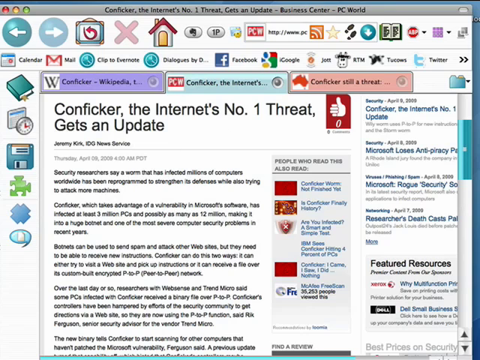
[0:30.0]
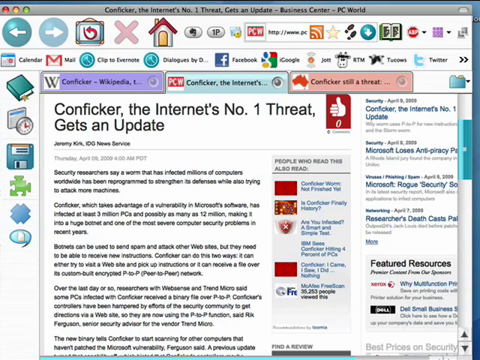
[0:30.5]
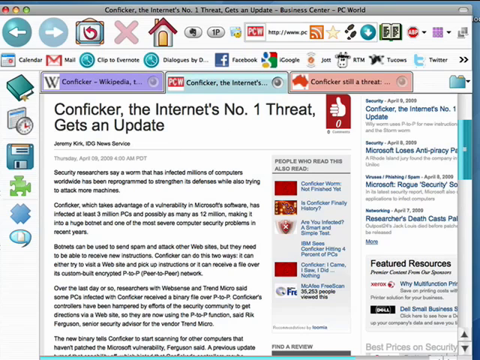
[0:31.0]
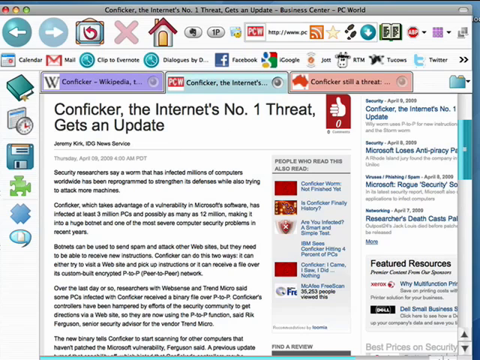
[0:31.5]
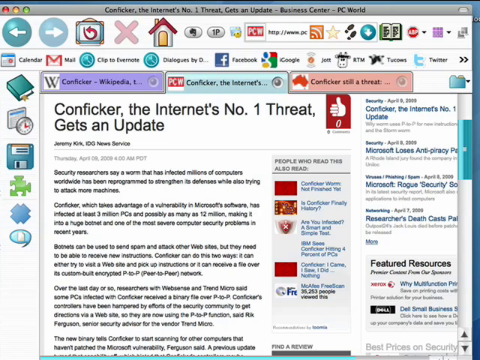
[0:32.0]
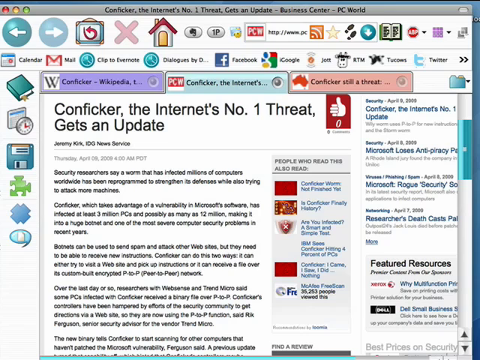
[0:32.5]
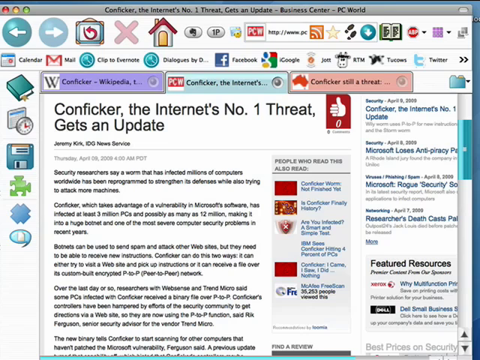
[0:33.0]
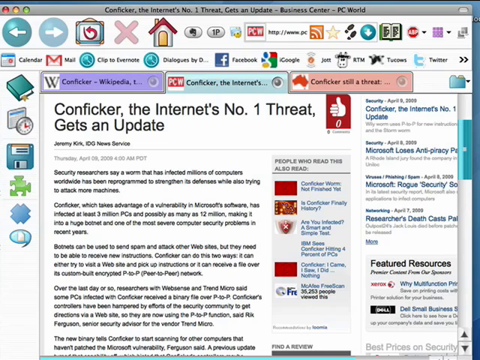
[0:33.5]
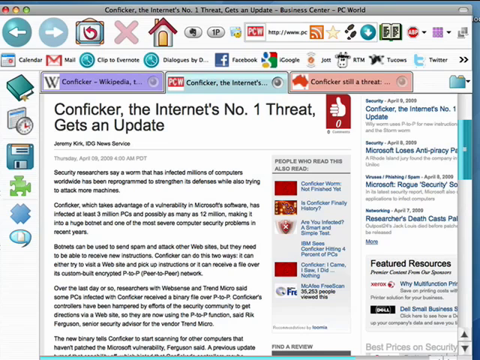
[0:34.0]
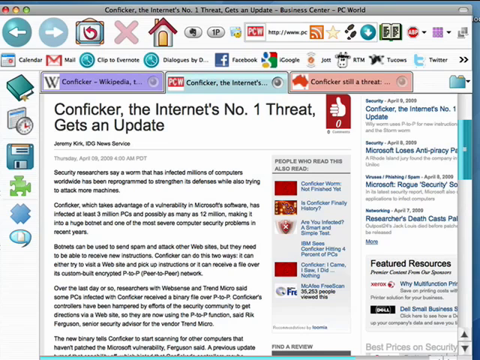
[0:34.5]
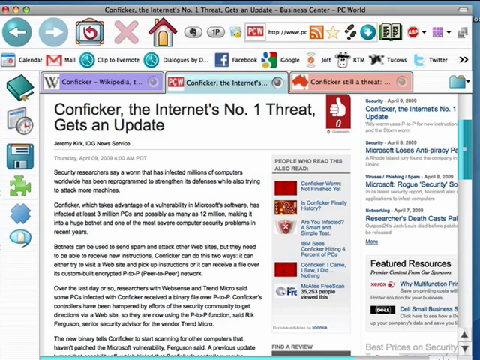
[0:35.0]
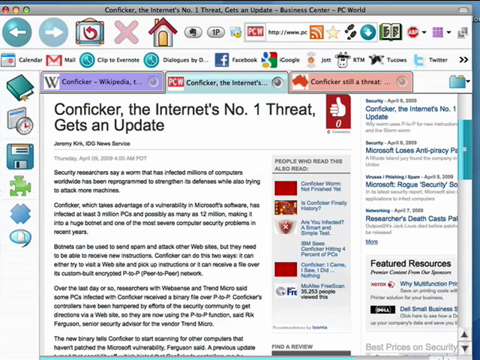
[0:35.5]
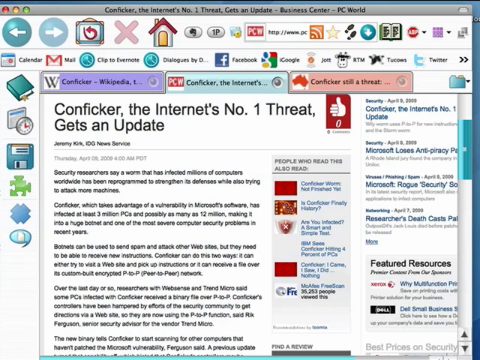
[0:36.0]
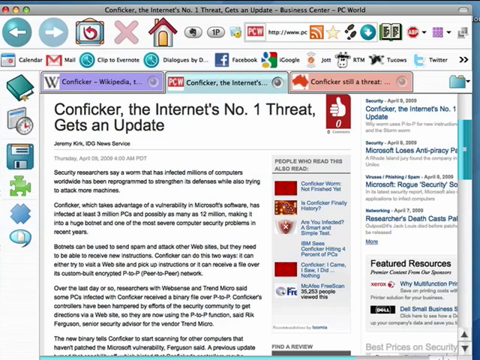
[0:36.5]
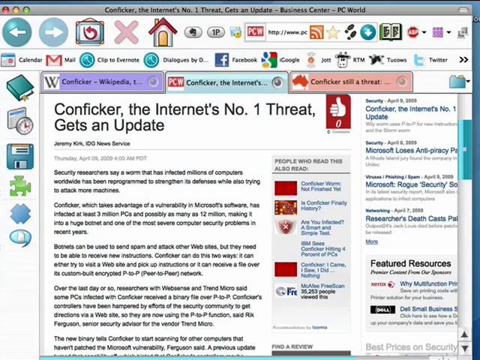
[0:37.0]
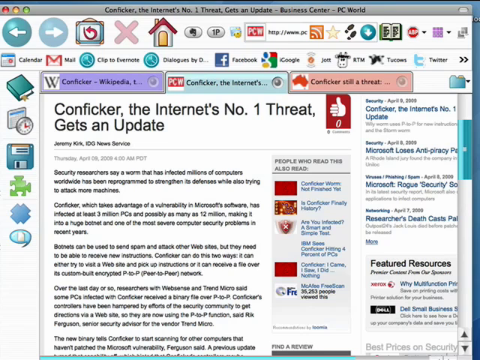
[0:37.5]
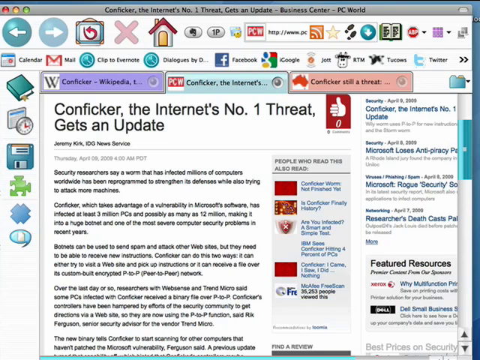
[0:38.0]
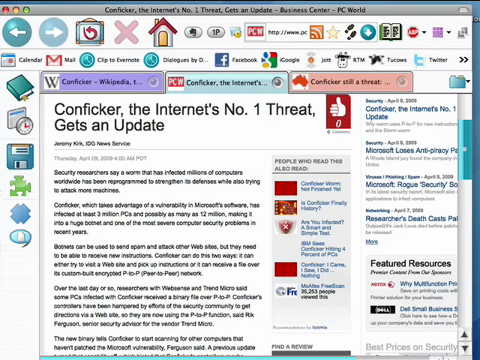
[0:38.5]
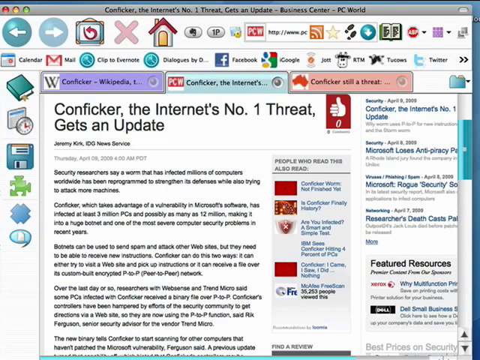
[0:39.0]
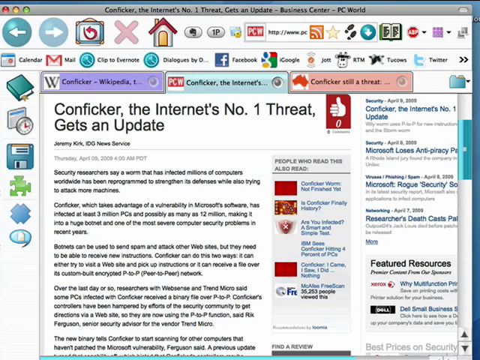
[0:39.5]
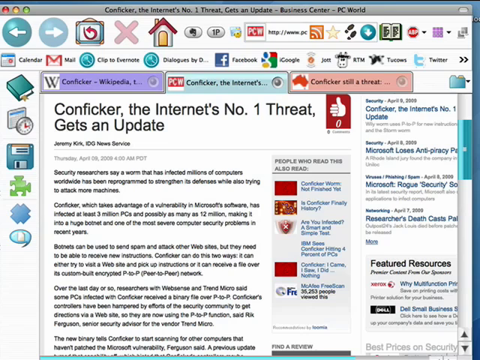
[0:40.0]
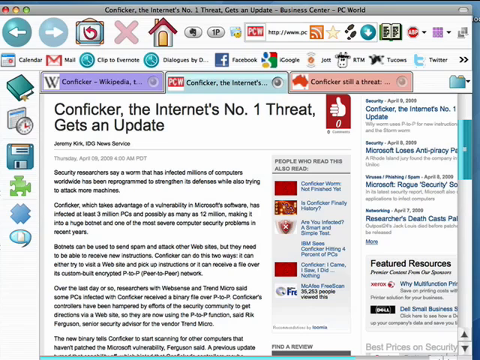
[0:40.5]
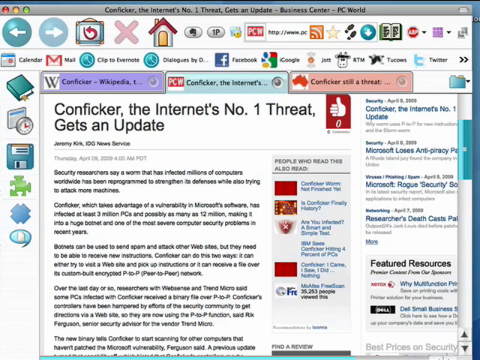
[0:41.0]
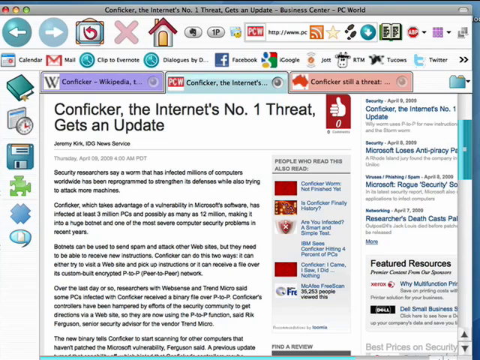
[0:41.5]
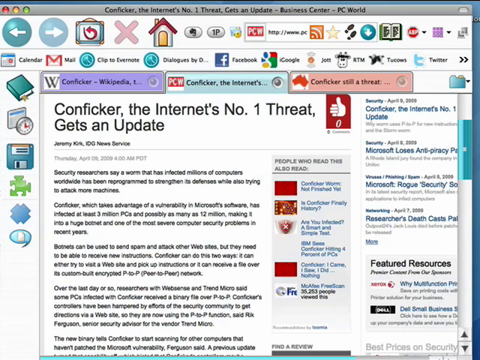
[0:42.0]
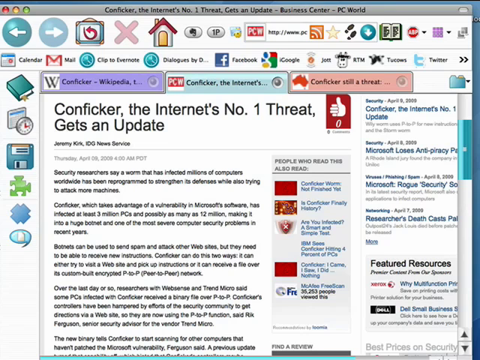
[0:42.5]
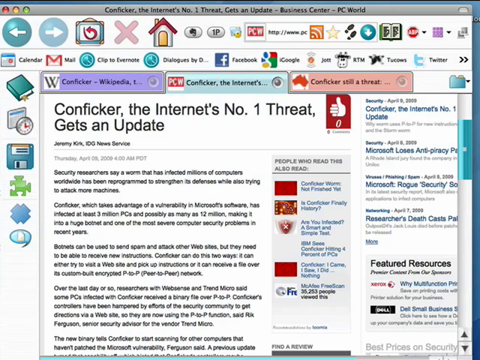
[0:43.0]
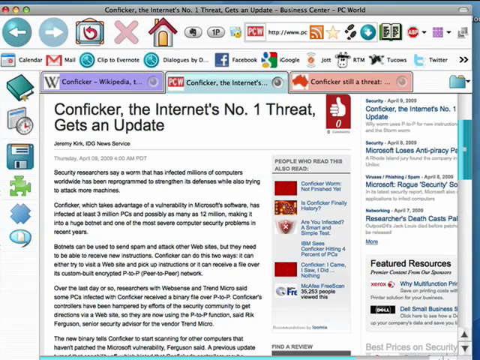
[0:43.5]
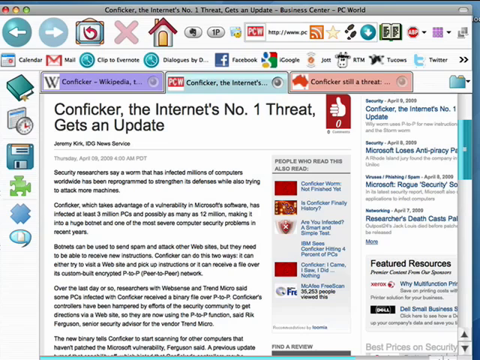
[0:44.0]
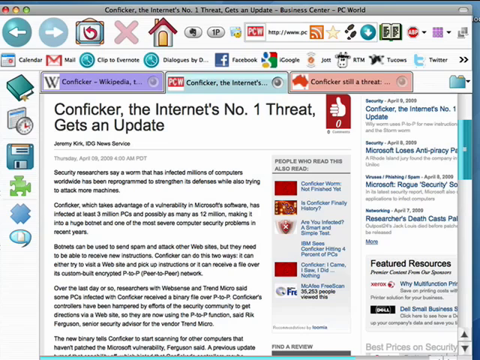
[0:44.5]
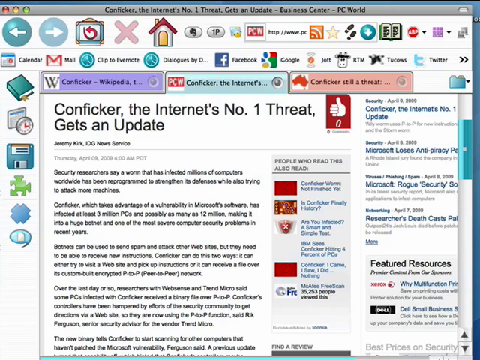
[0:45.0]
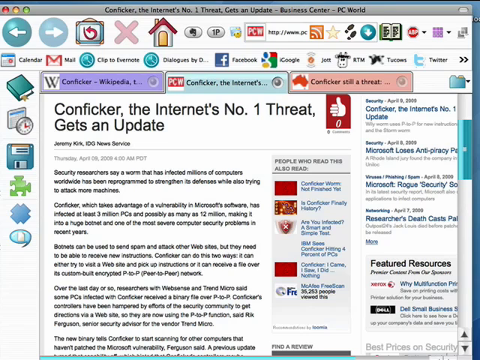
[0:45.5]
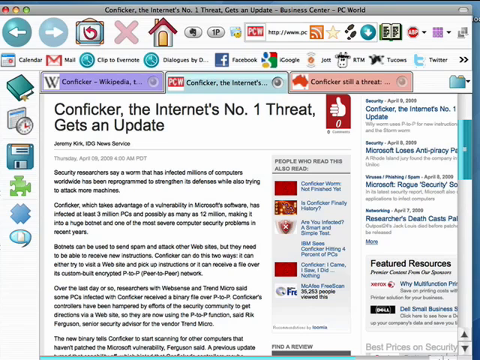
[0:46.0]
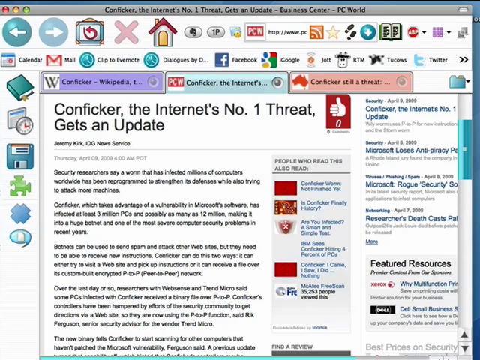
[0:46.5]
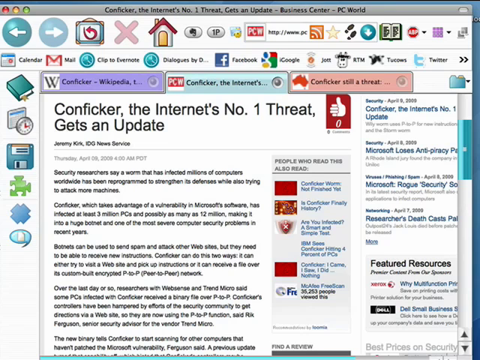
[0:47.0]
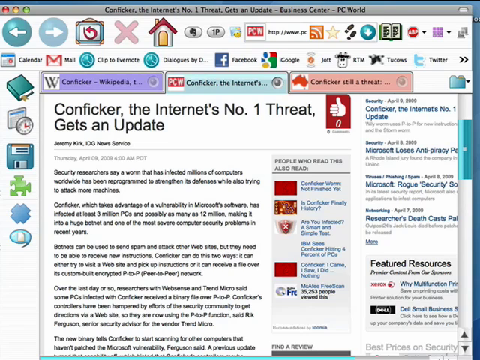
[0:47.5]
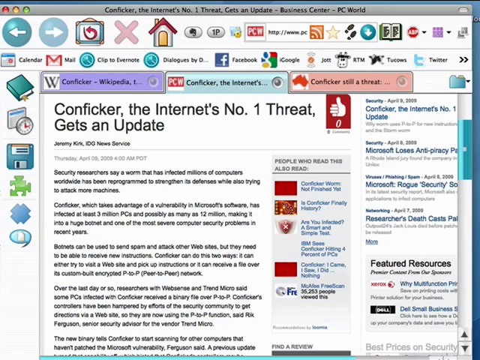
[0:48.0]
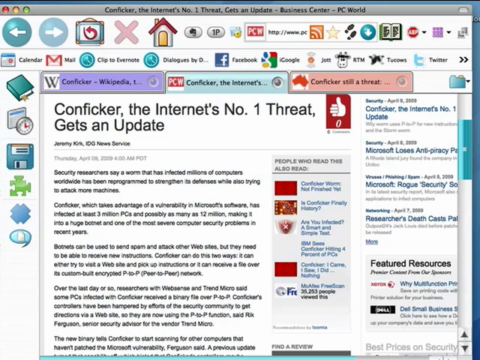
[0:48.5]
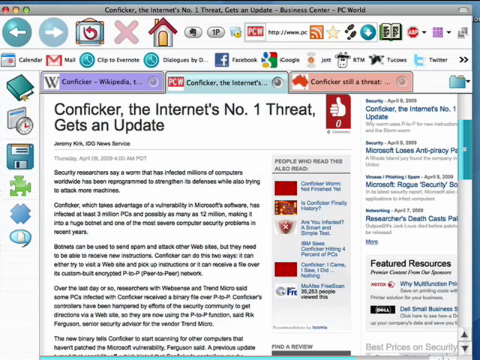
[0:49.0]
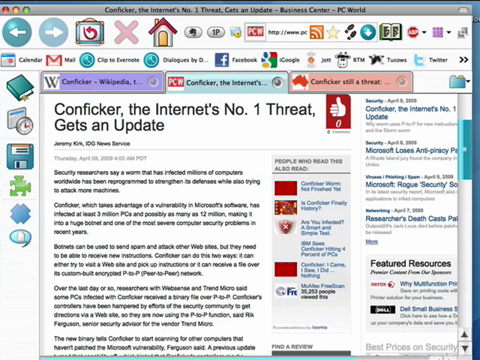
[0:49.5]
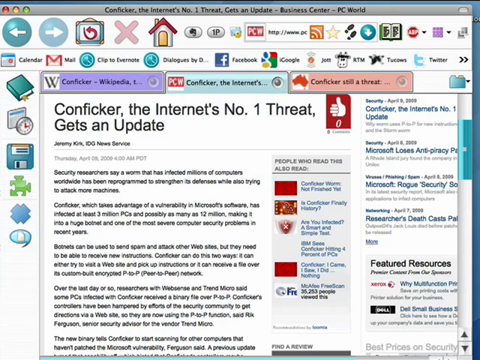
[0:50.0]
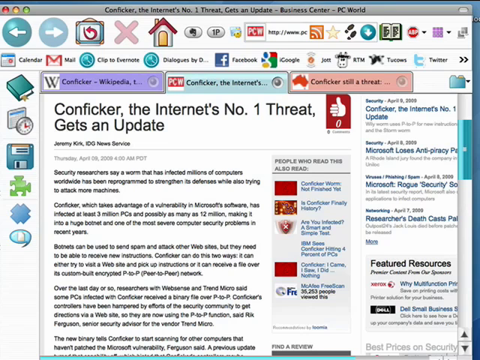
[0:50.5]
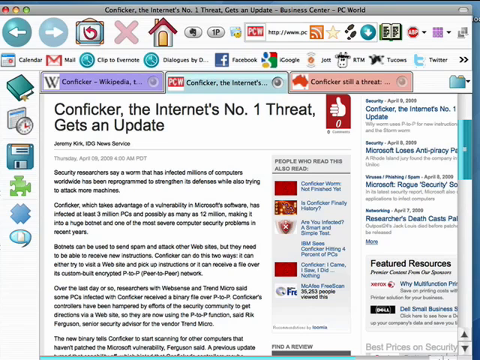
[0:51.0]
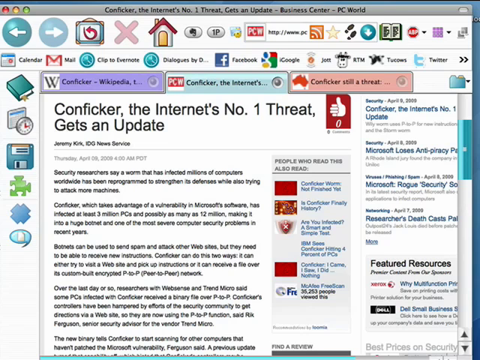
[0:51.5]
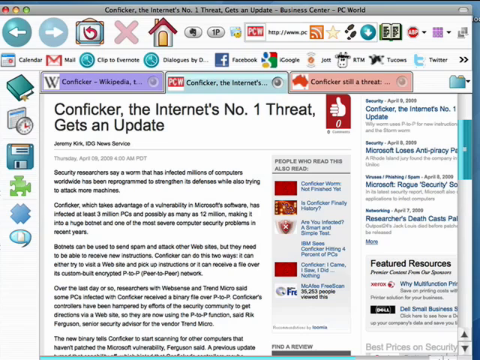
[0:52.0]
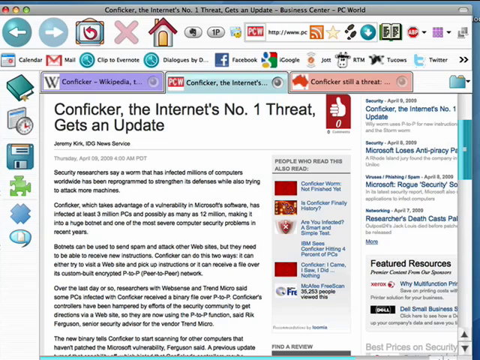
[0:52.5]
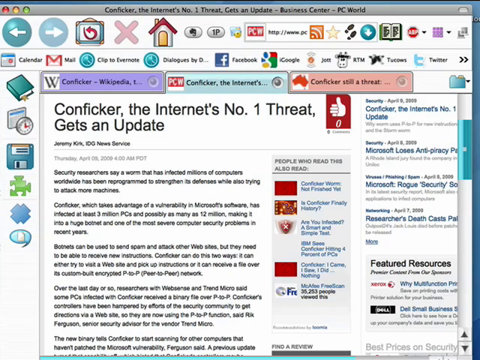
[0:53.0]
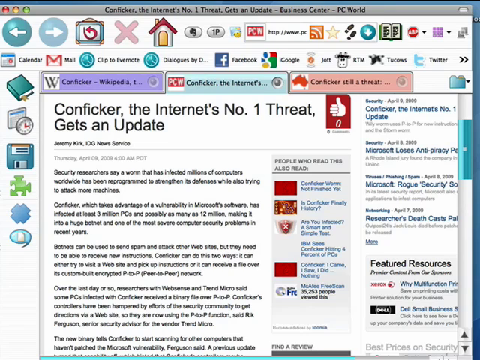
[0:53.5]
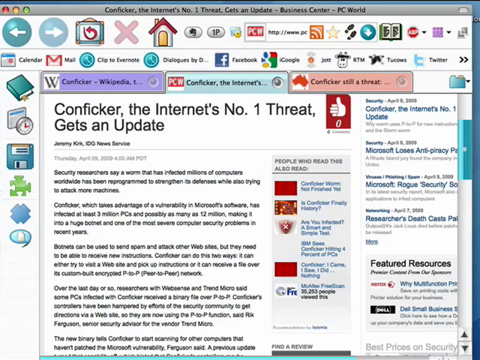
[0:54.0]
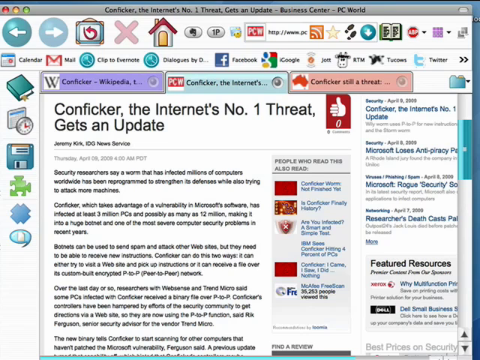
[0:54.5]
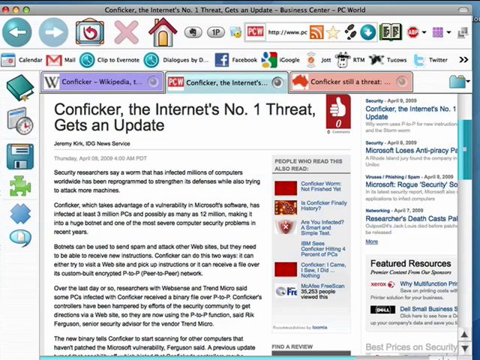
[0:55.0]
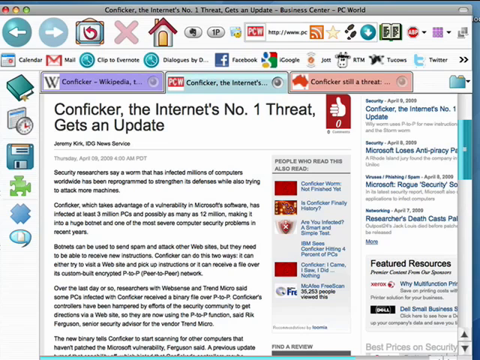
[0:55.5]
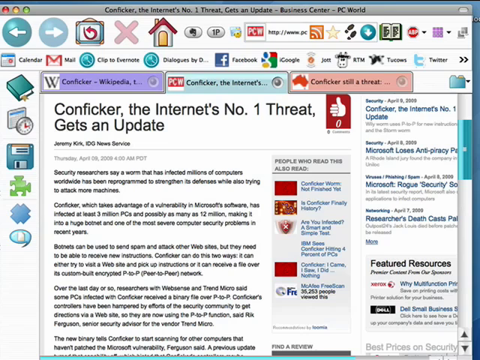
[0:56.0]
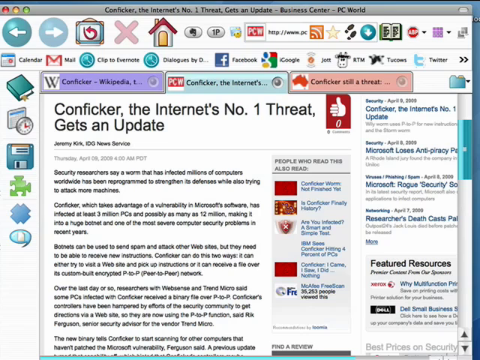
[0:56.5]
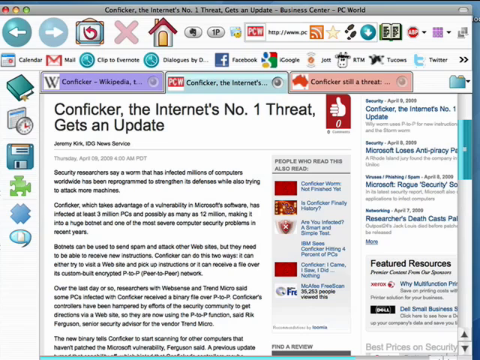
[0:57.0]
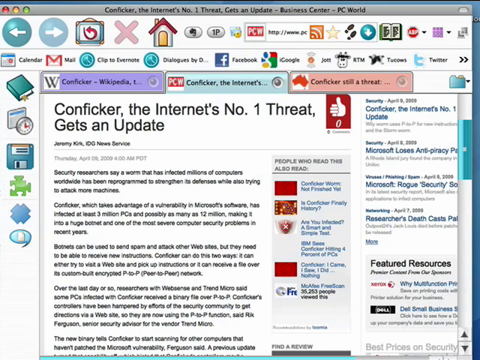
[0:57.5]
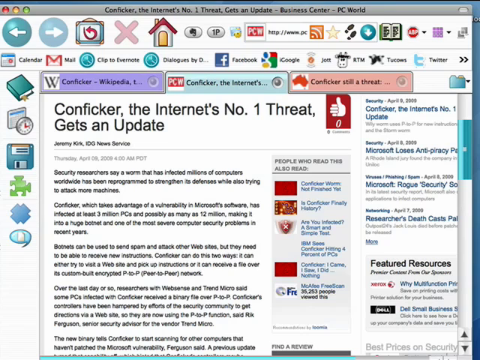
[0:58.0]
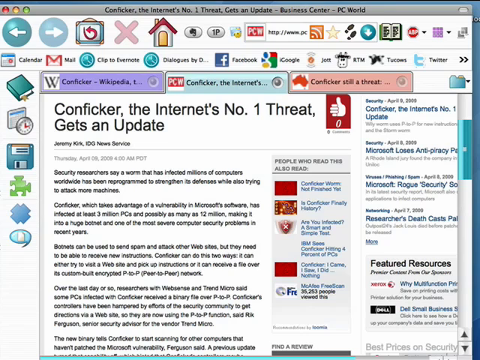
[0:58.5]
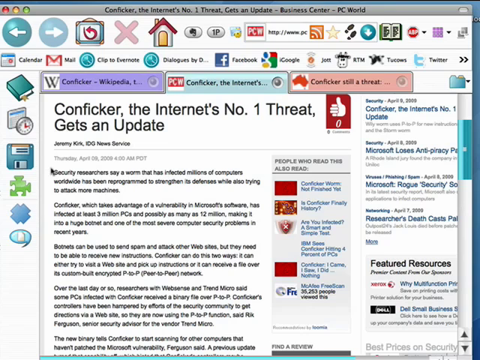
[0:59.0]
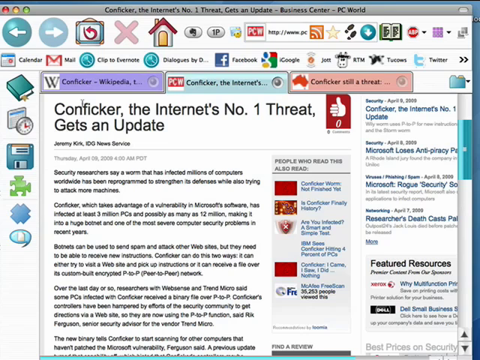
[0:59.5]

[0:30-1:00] A web page titled "Conficker the internet's number one threat gets an update" is shown; it is the second of three open tabs. The black mouse pointer emerges from the left side panel and moves toward the Conficker Wikipedia page, which is the first tab. The home section of the web page has big, bold, old icons such as back, forward, home, close and copy buttons, and below them are icons of apps like calendar, mail, Facebook and Twitter. The left side panel of the webpage has six icons, such as save and book. There is a white thumbs up on a red background. To the right of the website's topic, a few other articles are shown with names, dates and links. On the right is a big, light blue, rectangular scroll bar.